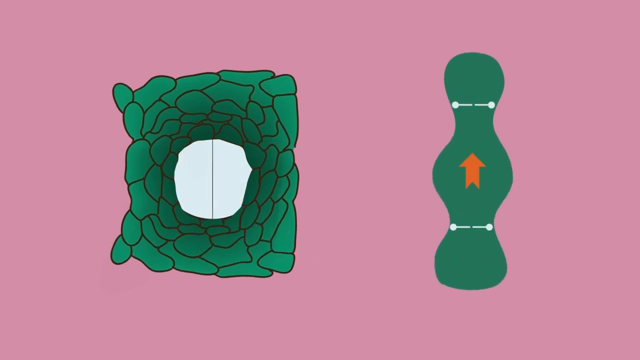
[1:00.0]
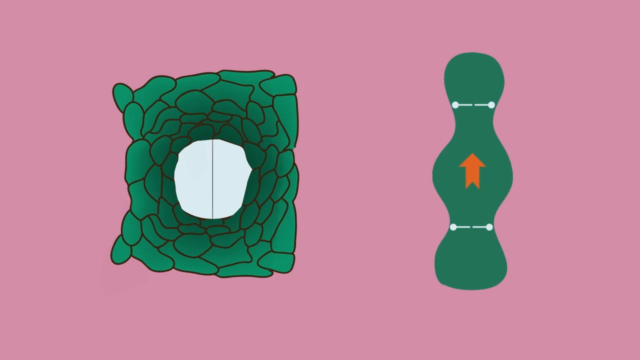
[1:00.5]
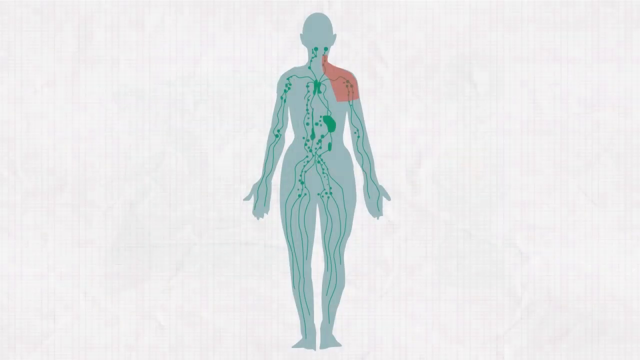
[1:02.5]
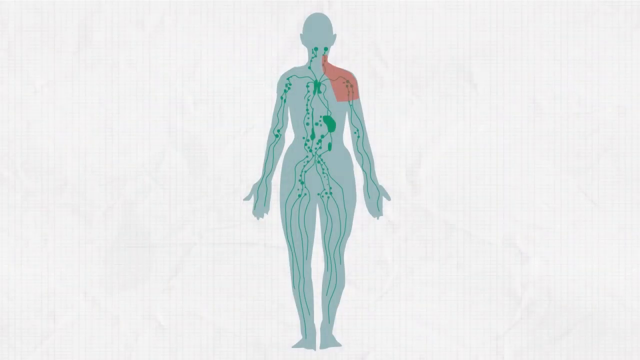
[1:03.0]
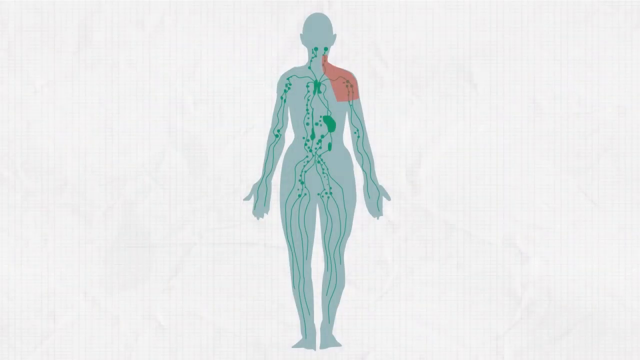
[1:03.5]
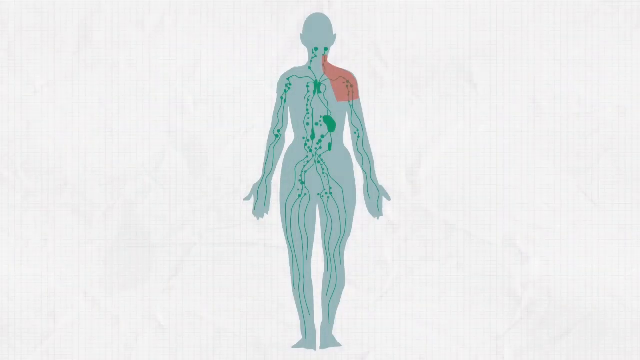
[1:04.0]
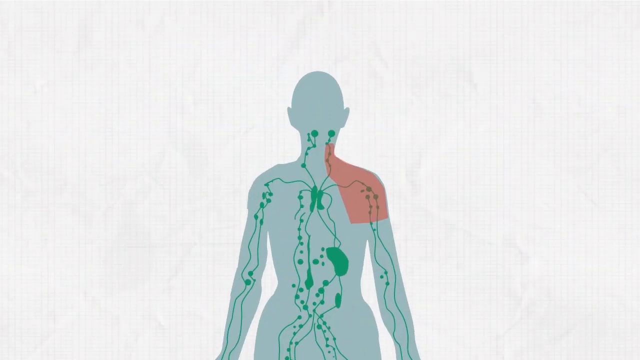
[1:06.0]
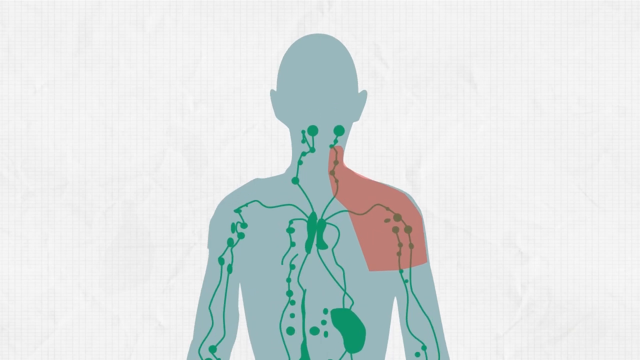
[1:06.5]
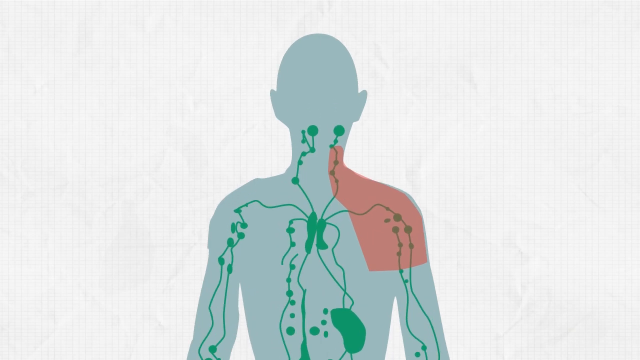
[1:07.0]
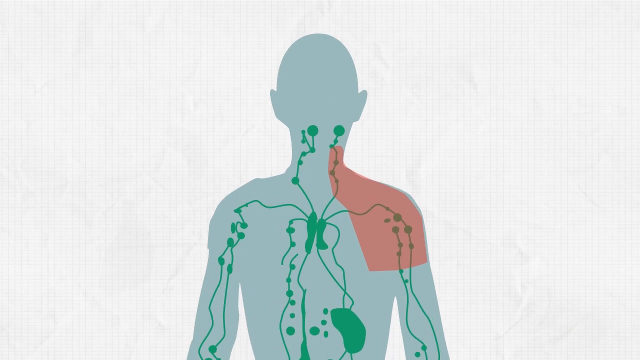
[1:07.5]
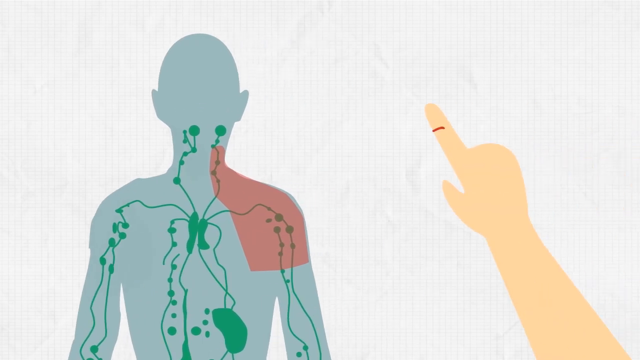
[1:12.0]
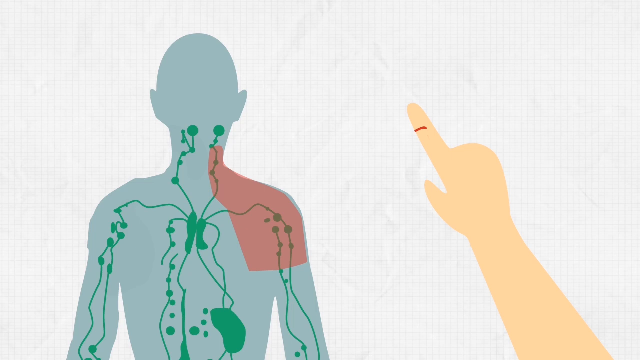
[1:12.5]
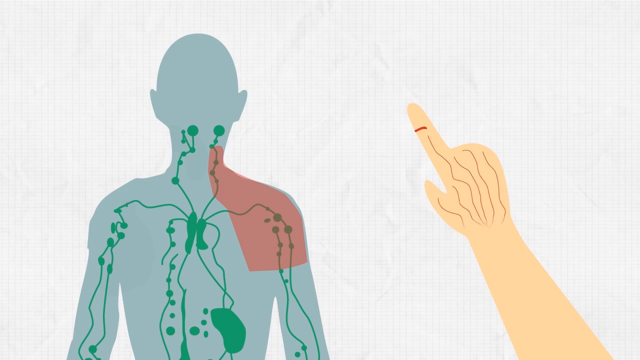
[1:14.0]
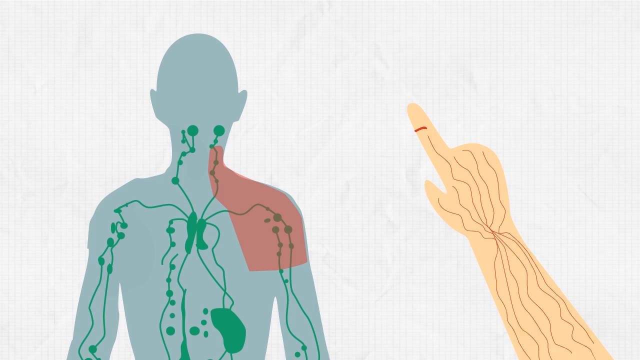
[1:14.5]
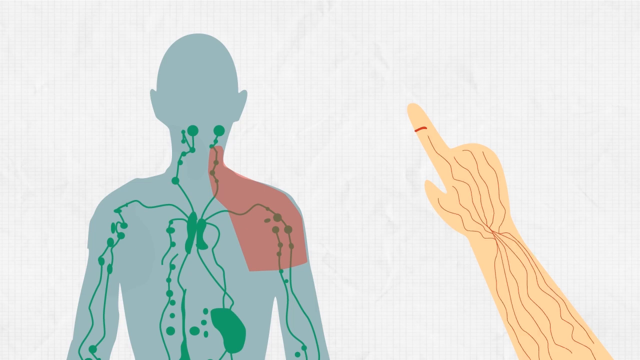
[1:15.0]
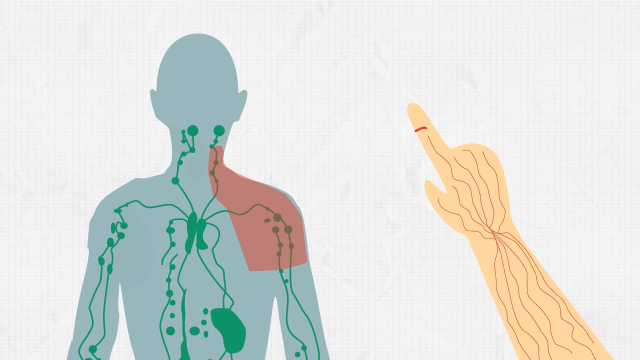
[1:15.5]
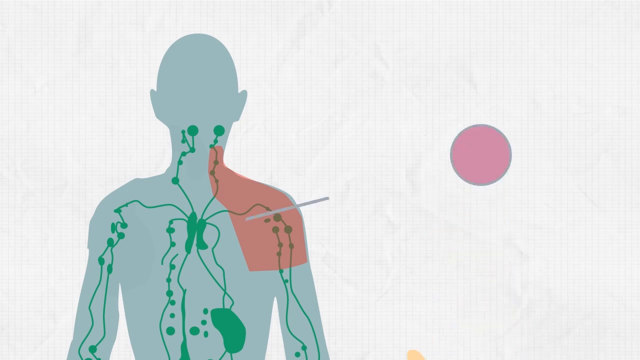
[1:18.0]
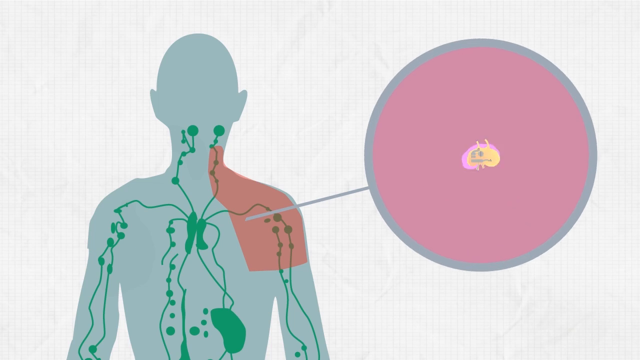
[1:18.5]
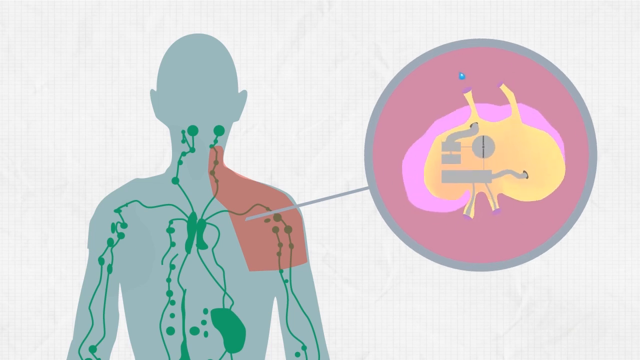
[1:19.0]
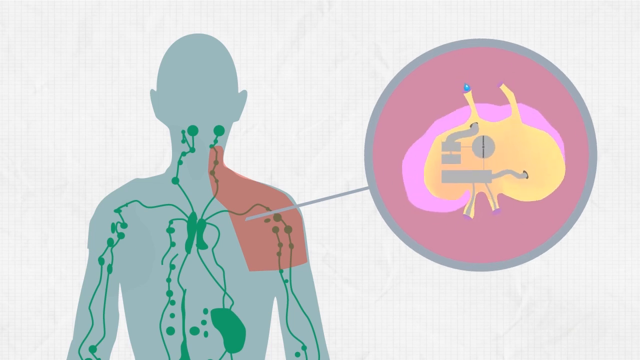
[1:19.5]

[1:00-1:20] The silhouette returns, centered on an all-white background with its green lines and little splotches, and the shoulder on the viewer's right is highlighted in kind of a dark peach color. A flesh-colored arm with a bunch of red, squiggly-line veins comes up to the right of the silhouette, pointer finger extended, and then disappears. The pointer finger has a little horizontal red dash on top, almost like a little red cut, followed by little vertical squiggly lines. A gray line then points from the shoulder to a pink circle outlined in gray, containing some kind of organ: kind of a yellow splotch outlined in pink with little gray bits in the middle. What looks like a little water droplet enters a tube into the yellow part, and then the motion appears to stop.